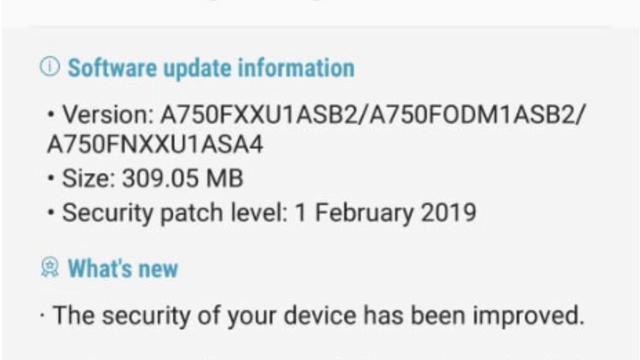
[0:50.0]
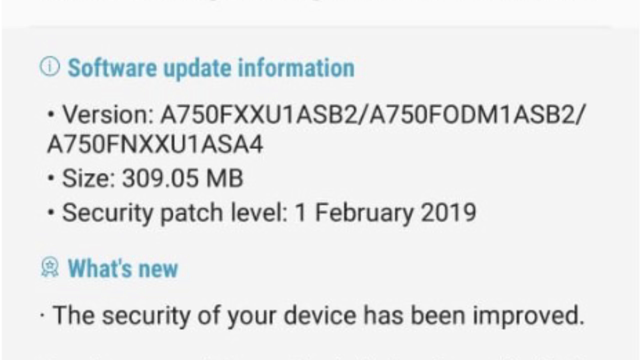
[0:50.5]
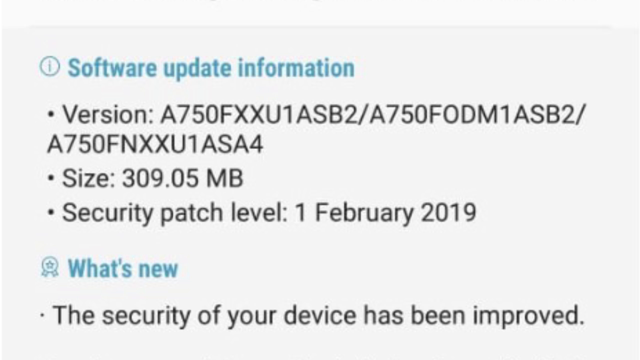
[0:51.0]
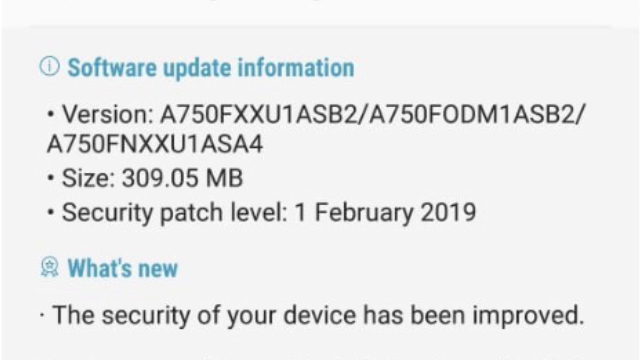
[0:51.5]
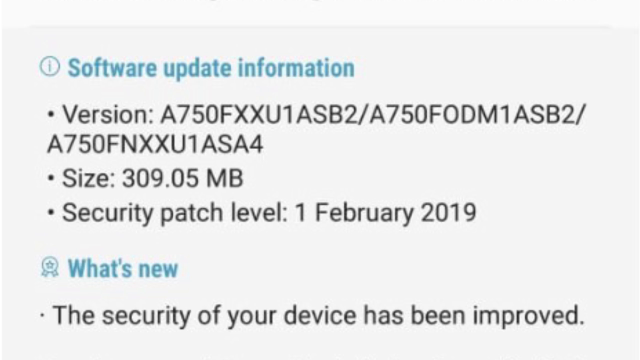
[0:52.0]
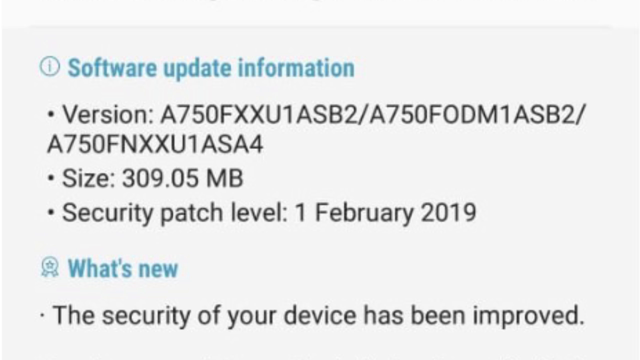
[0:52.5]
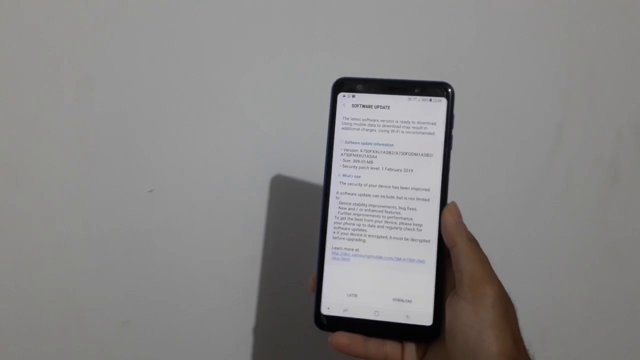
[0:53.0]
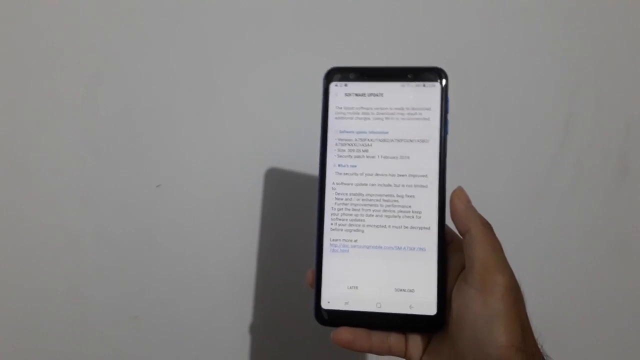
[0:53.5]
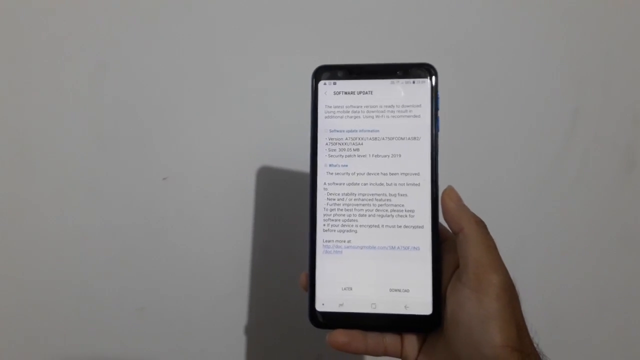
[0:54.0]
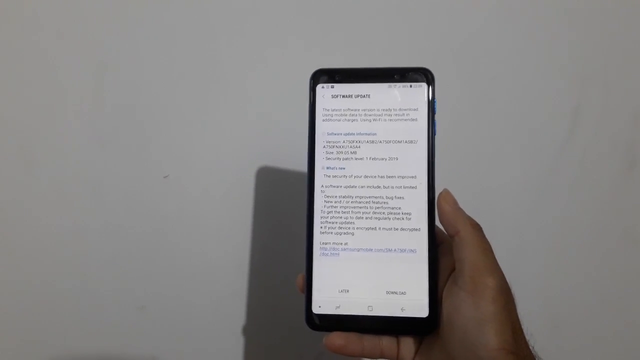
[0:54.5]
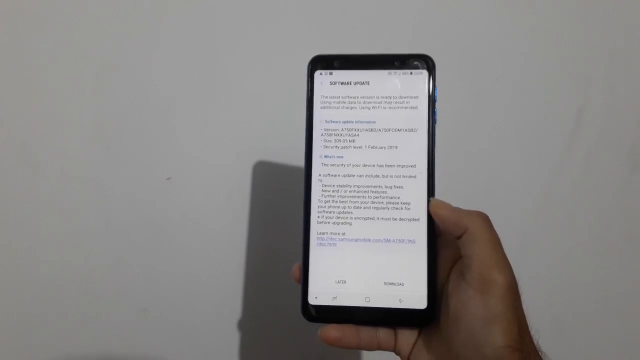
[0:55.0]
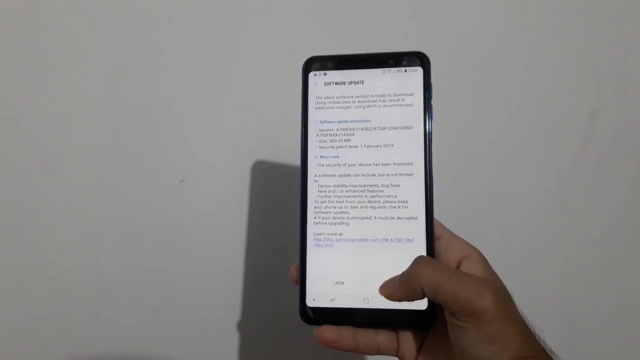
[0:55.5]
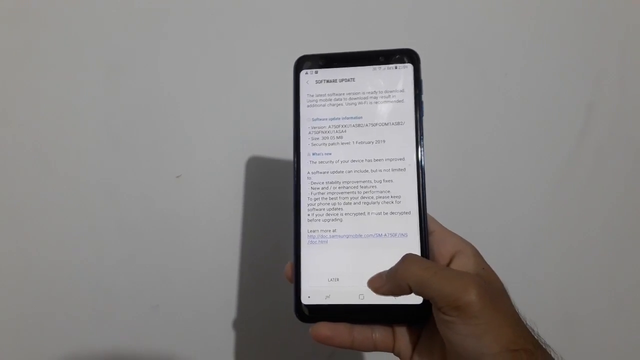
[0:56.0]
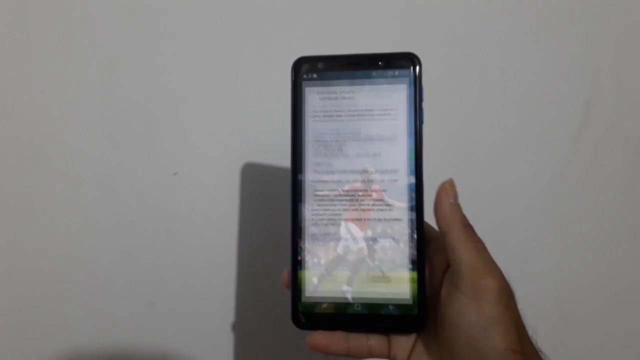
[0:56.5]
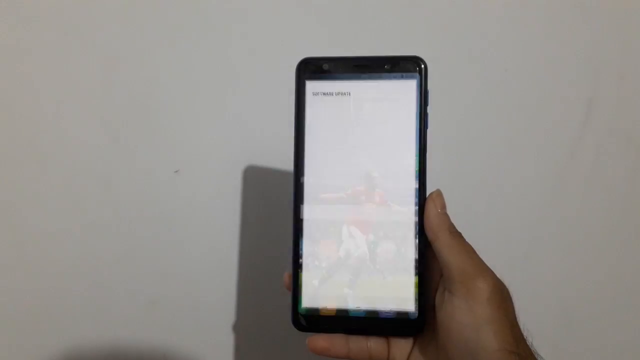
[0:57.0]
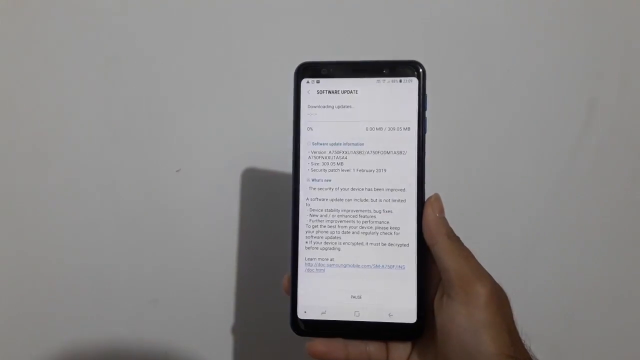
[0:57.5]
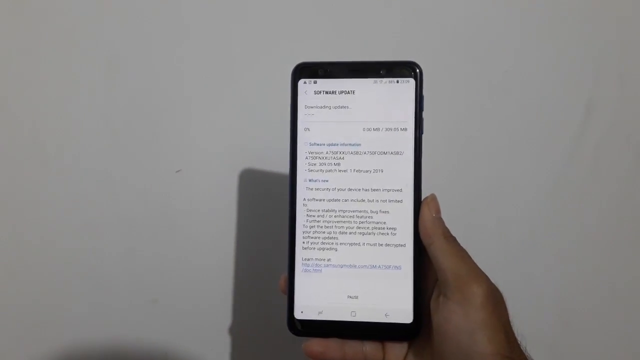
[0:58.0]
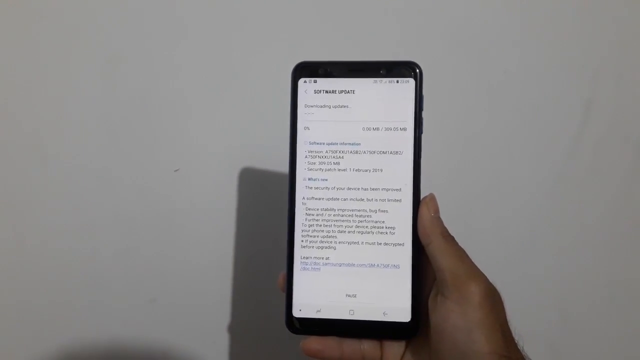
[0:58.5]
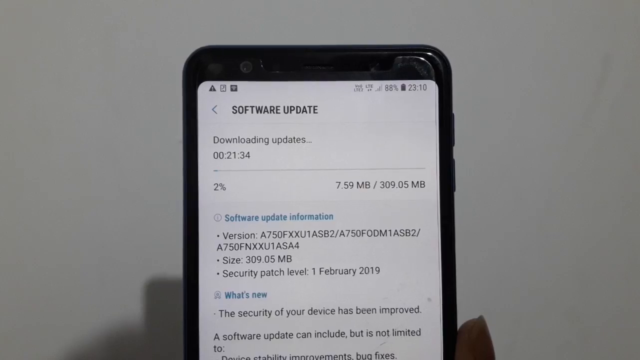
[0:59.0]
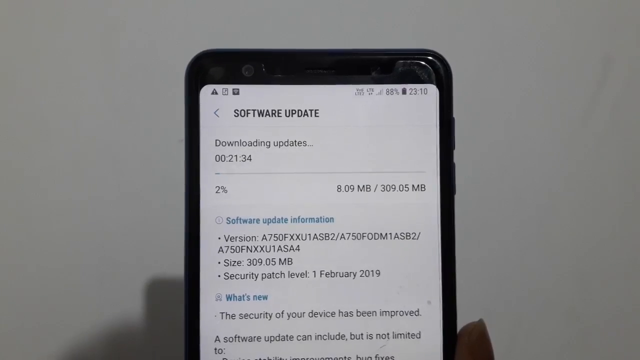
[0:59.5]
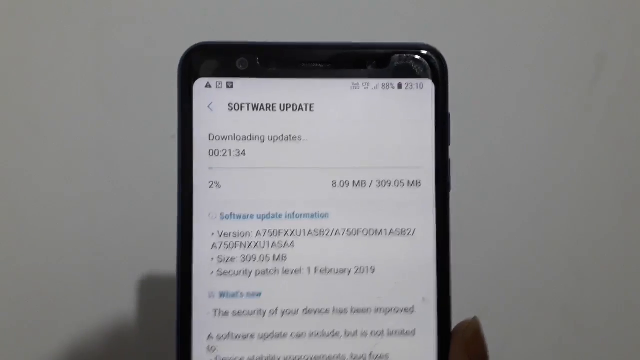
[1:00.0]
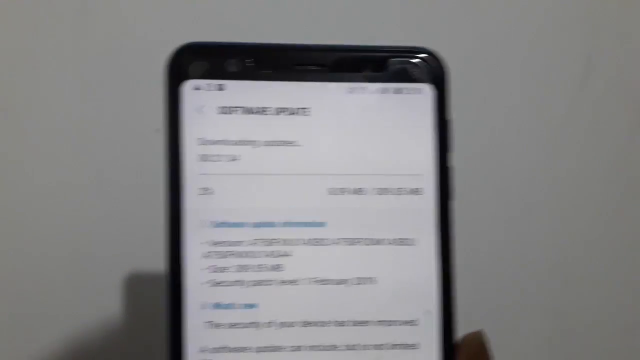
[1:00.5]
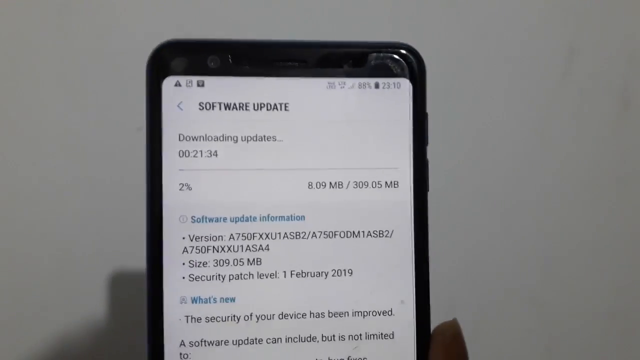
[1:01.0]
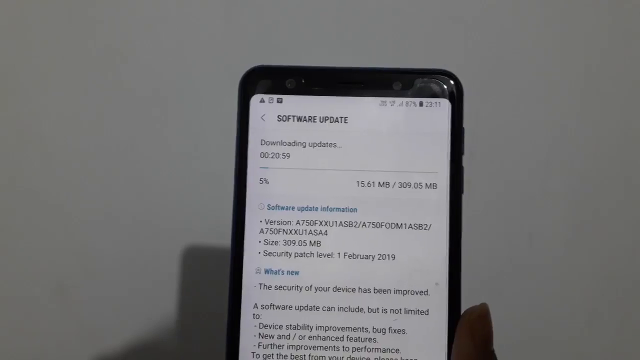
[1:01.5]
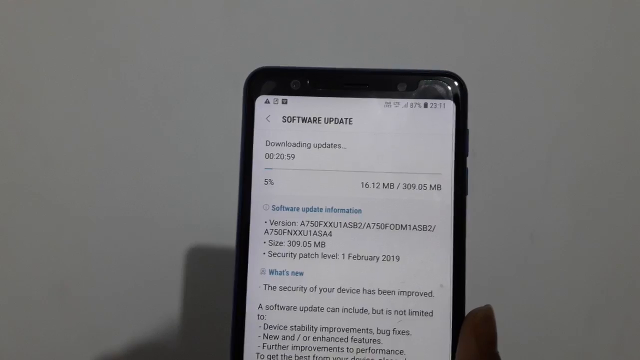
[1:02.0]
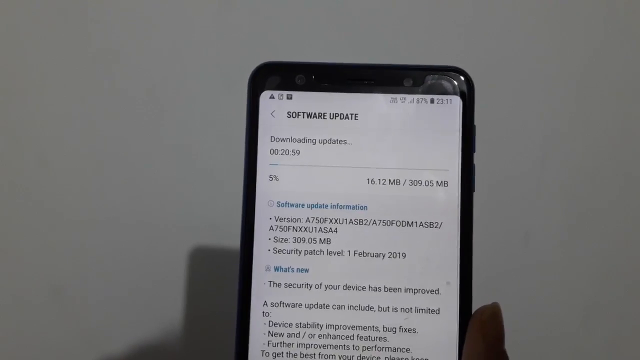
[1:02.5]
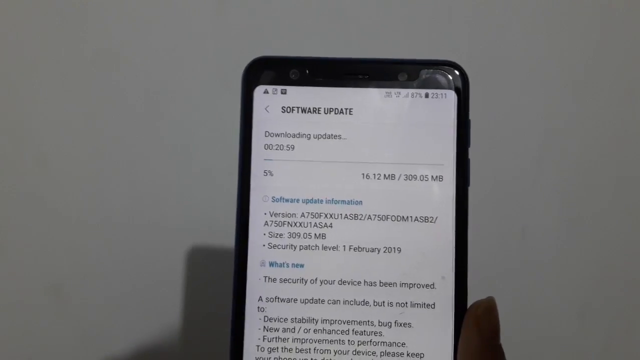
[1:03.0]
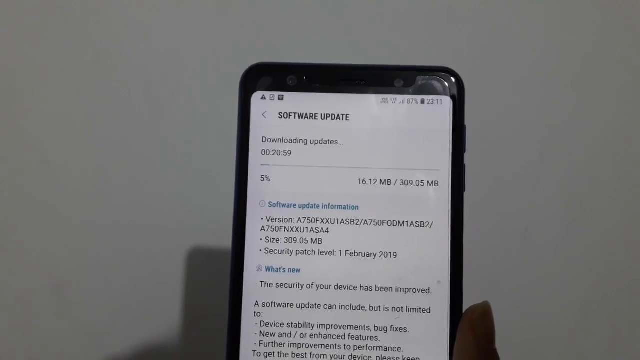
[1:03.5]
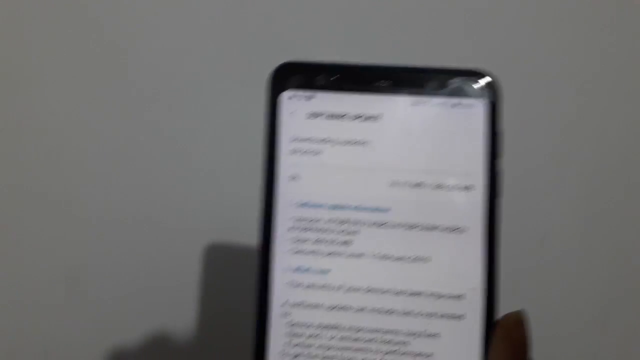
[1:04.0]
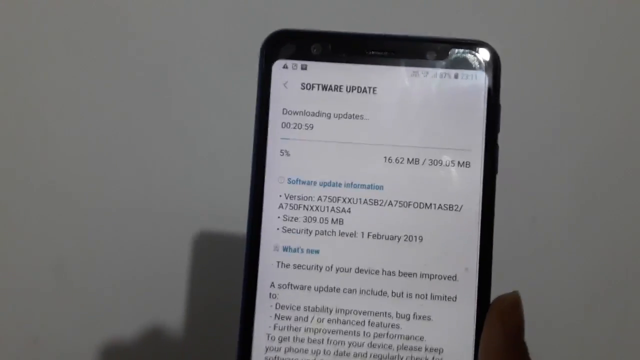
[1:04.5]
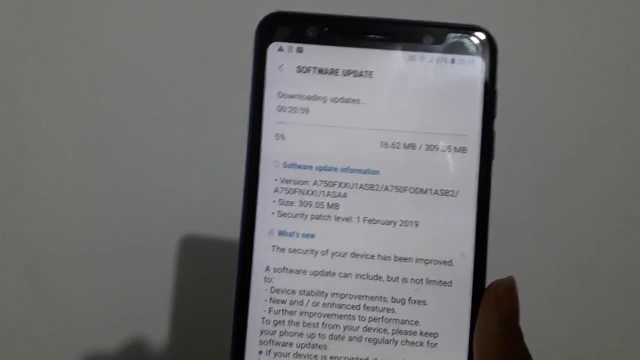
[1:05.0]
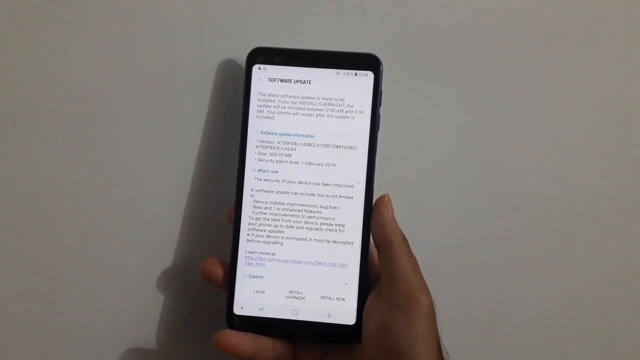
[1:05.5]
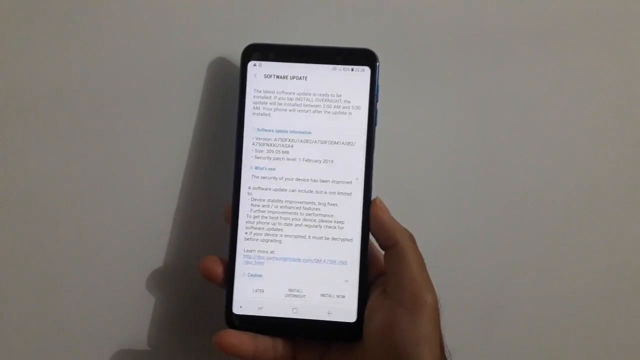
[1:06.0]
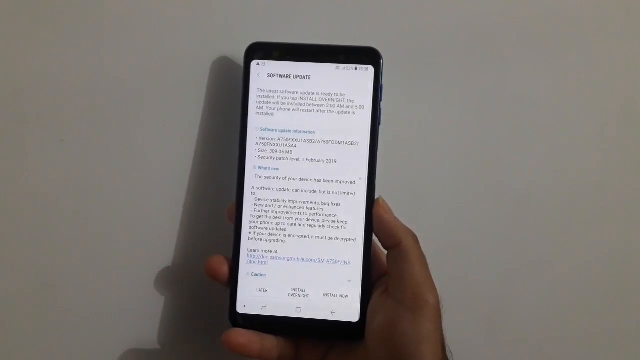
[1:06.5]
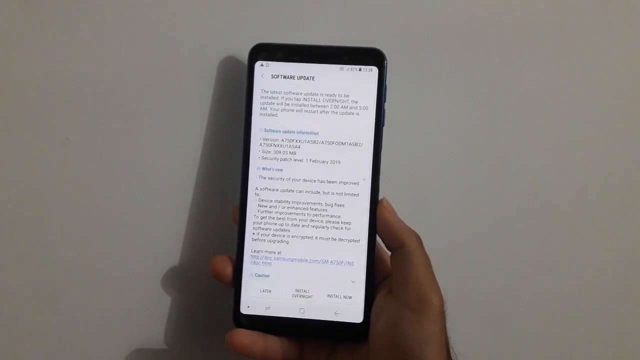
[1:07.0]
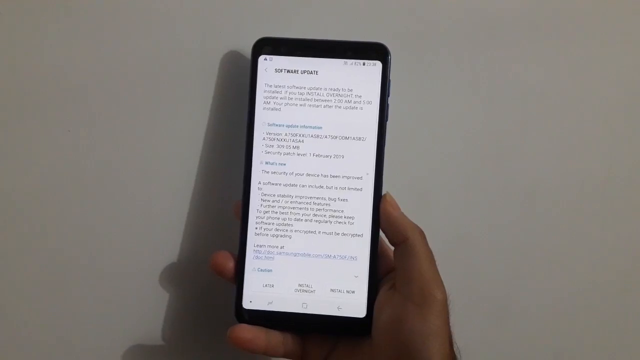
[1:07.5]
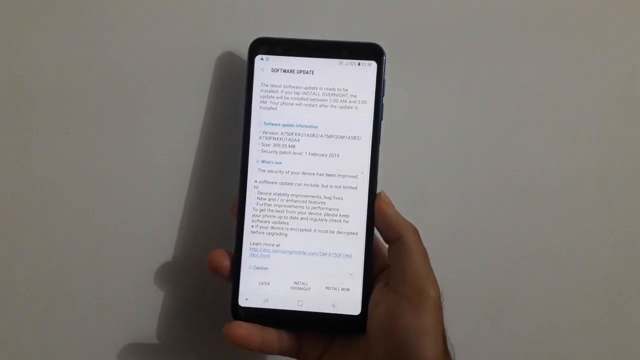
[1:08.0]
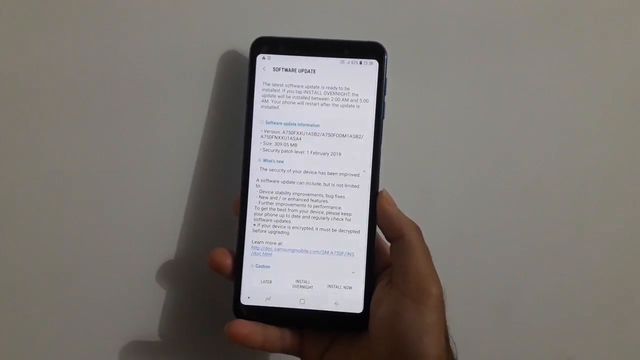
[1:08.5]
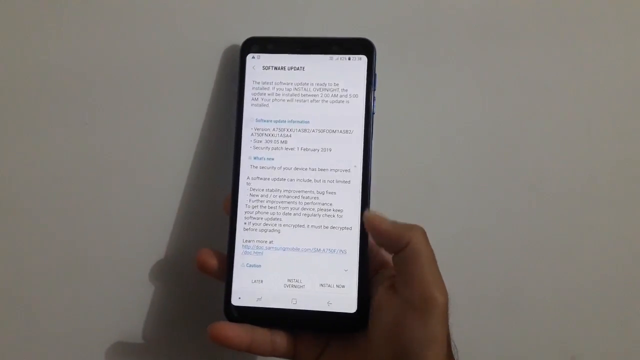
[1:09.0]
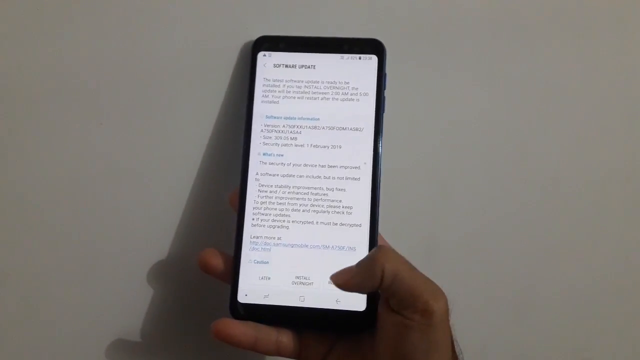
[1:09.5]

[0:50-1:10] Software update information appears in blue on a white background. A woman shows a Samsung phone, holding it between her thumb on the right side and two fingers on the left side. Before this page, she clicks on the phone and all her apps appear, then that closes and she brings up the software update. She moves the phone closer to the camera, showing "software update" in her browser and the page with the instructions. She moves it a little, then clicks with her thumb on something all the way at the bottom of the page. The phone casts a shadow on the wall. A printed version appears, with "software update" in blue and the information in black; it says "what's new" and states that the security of the device has been improved.